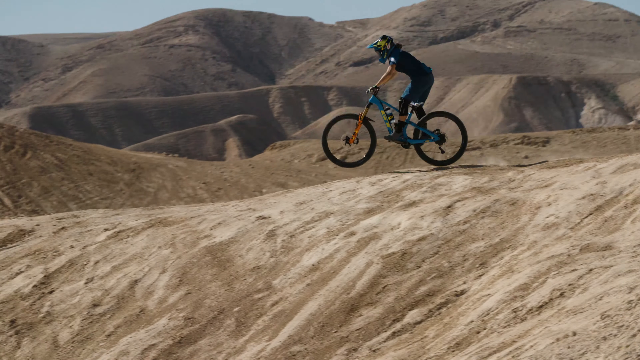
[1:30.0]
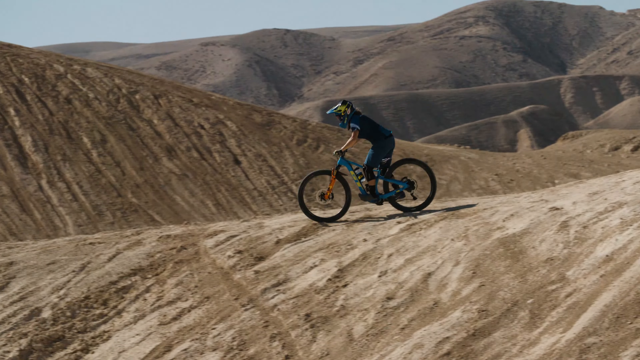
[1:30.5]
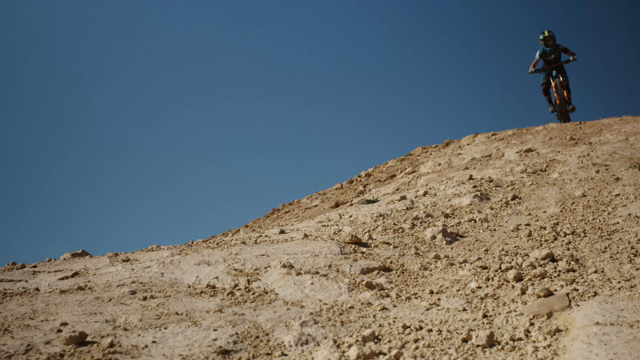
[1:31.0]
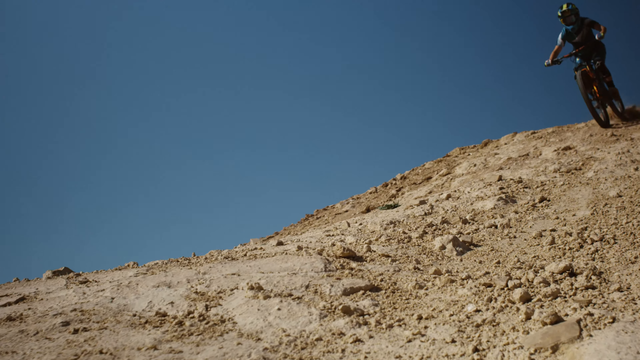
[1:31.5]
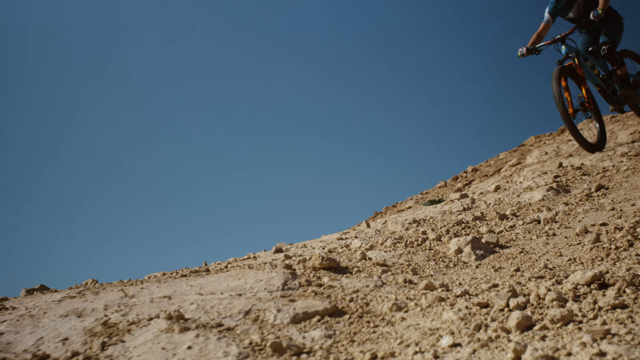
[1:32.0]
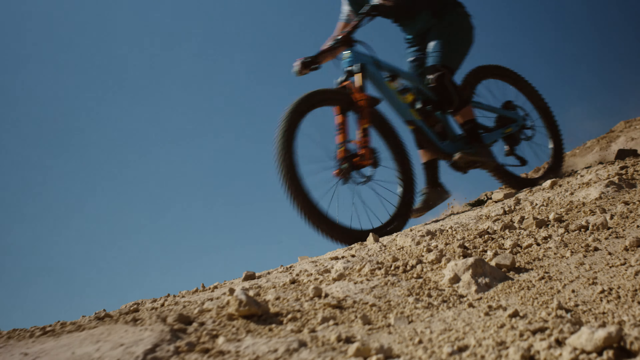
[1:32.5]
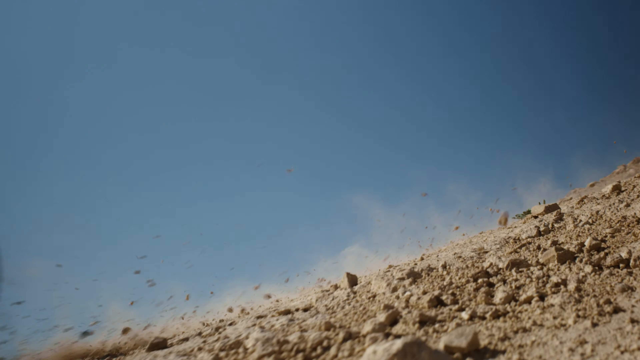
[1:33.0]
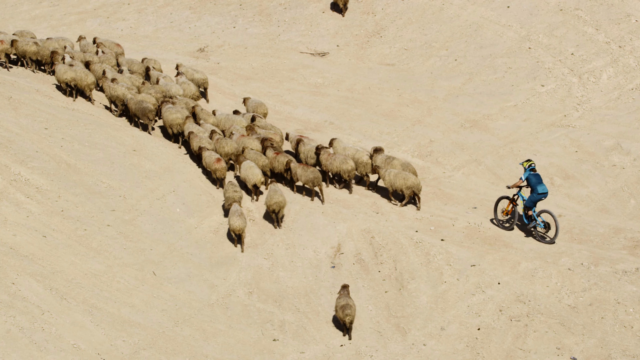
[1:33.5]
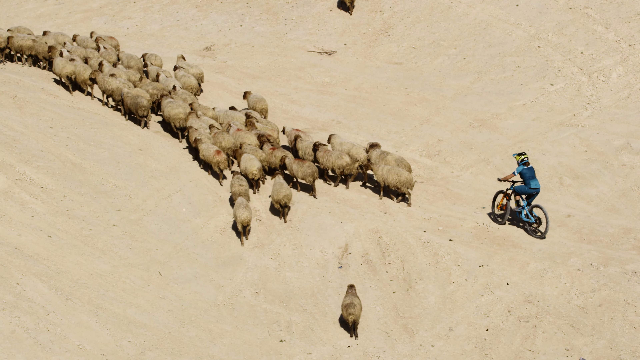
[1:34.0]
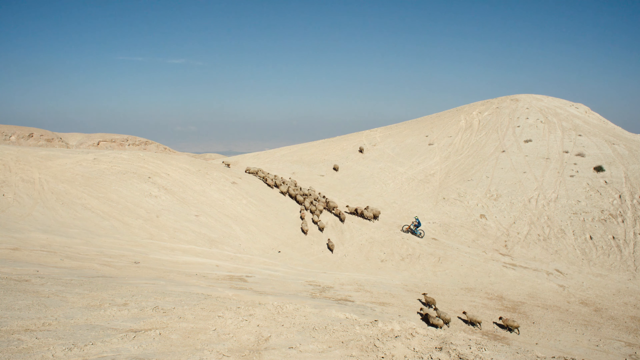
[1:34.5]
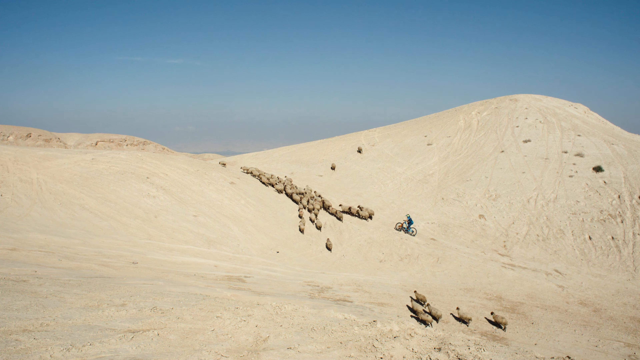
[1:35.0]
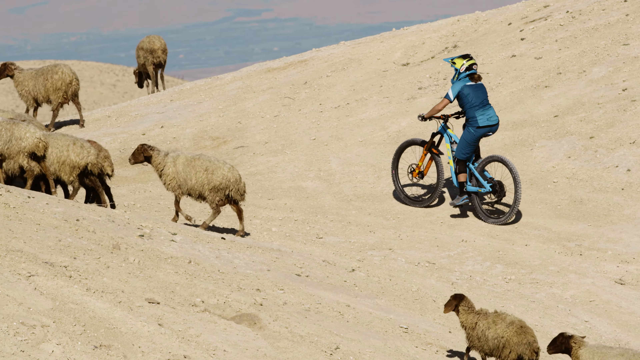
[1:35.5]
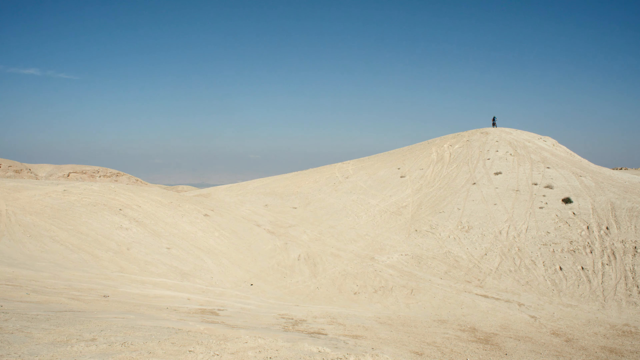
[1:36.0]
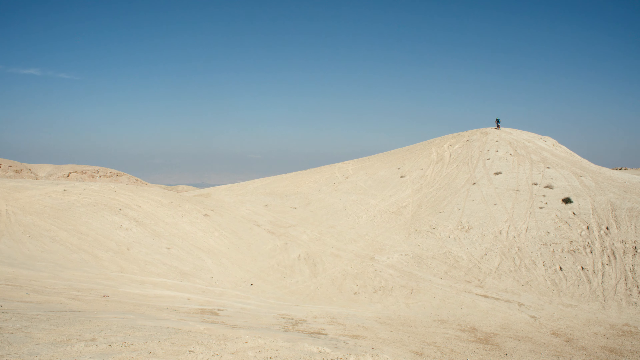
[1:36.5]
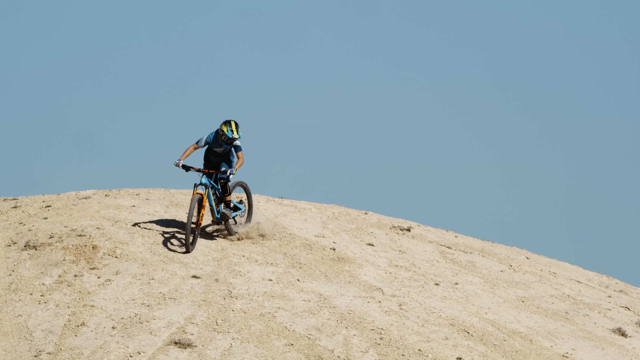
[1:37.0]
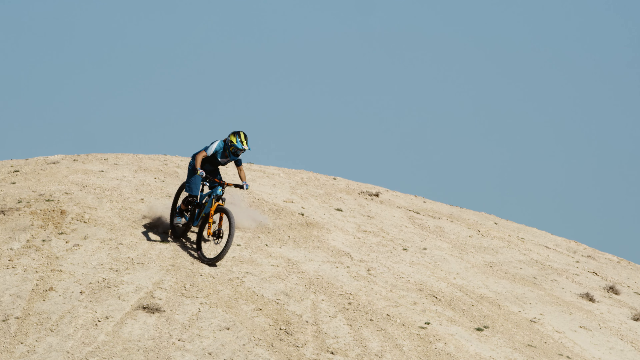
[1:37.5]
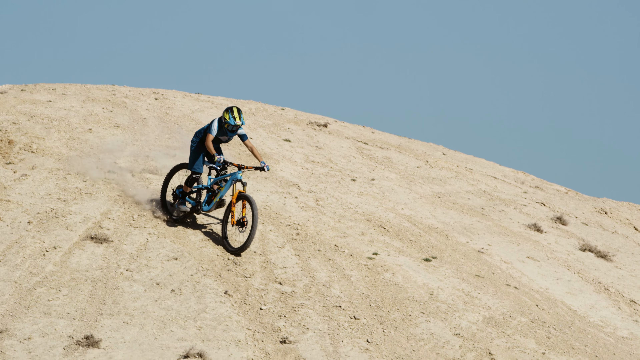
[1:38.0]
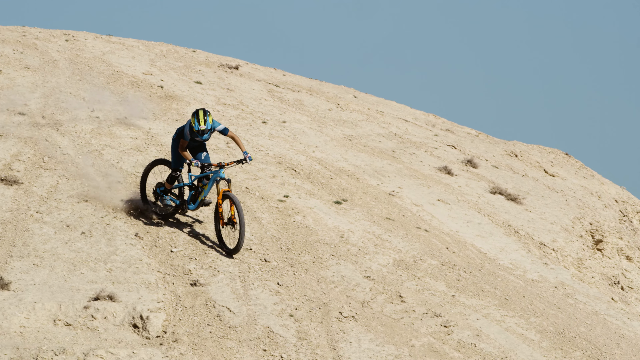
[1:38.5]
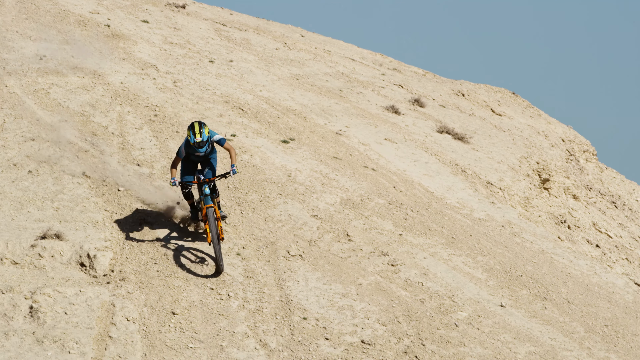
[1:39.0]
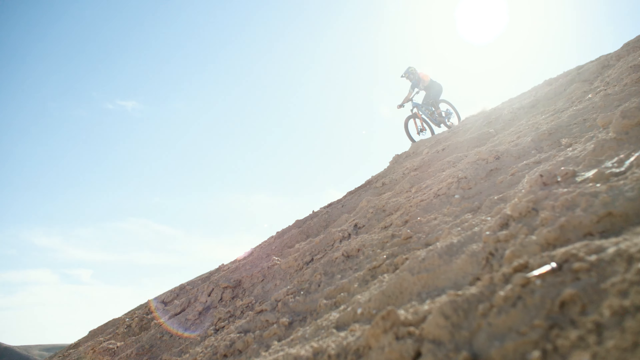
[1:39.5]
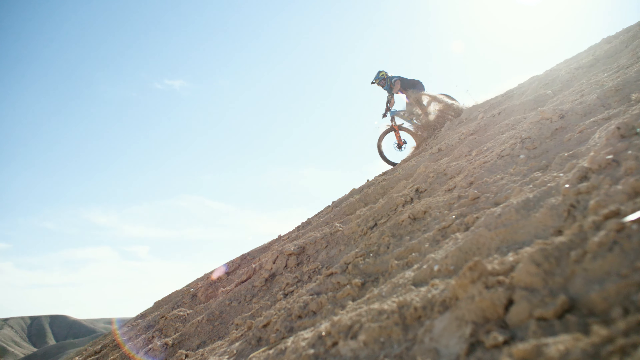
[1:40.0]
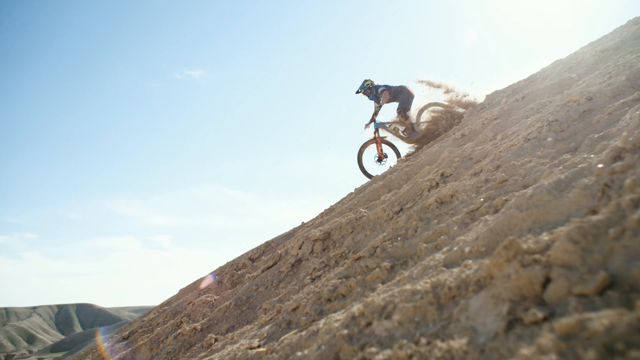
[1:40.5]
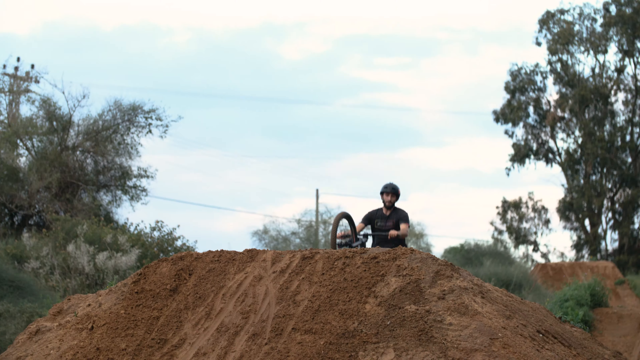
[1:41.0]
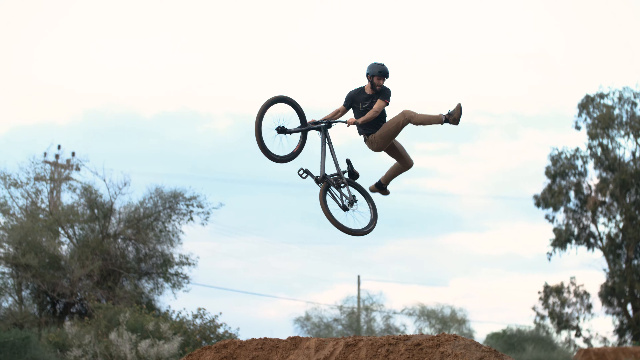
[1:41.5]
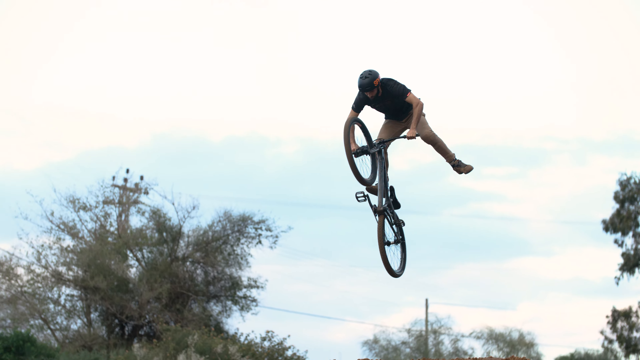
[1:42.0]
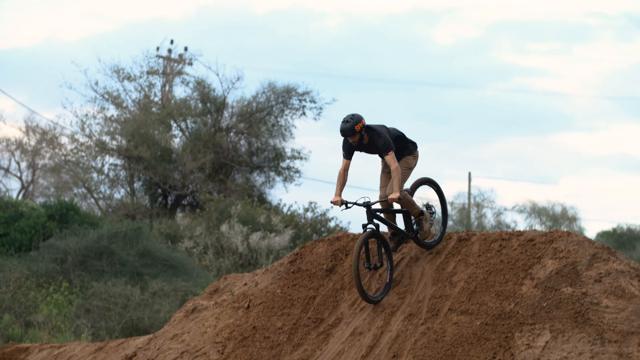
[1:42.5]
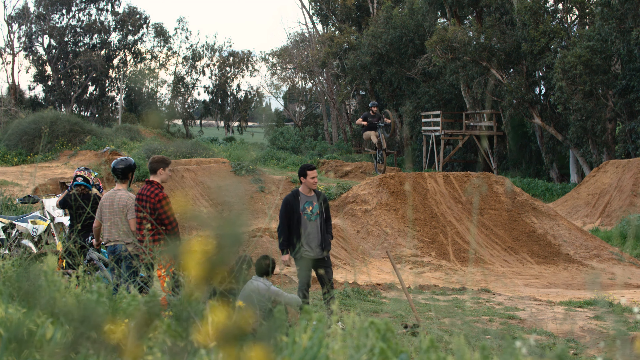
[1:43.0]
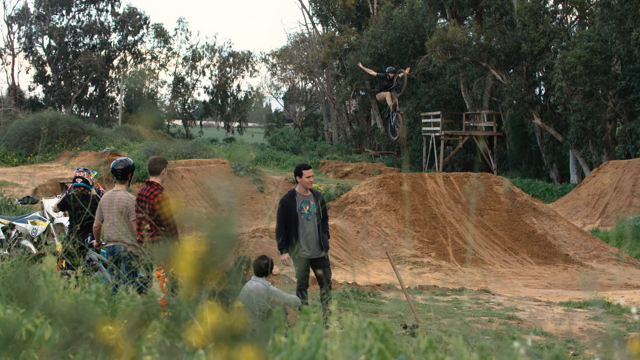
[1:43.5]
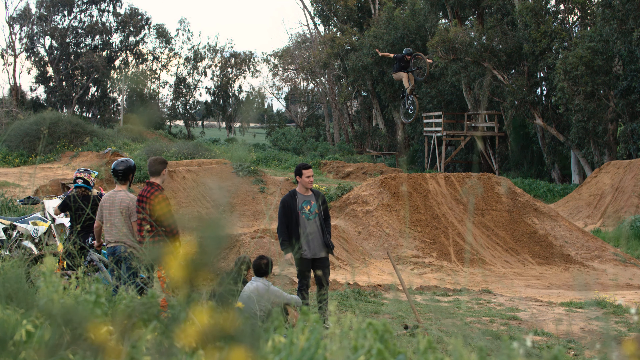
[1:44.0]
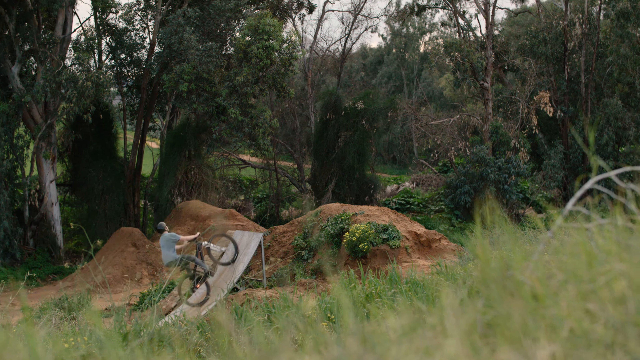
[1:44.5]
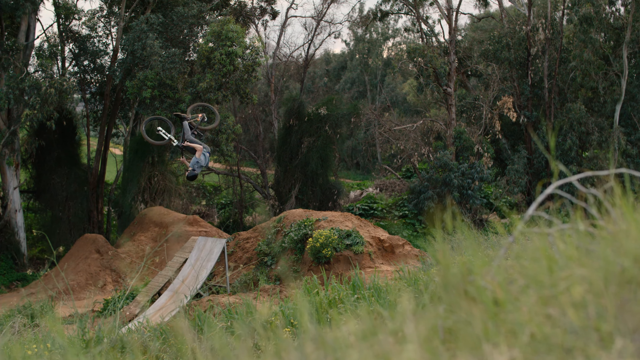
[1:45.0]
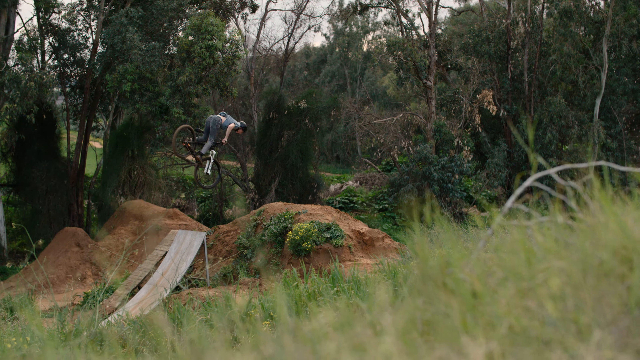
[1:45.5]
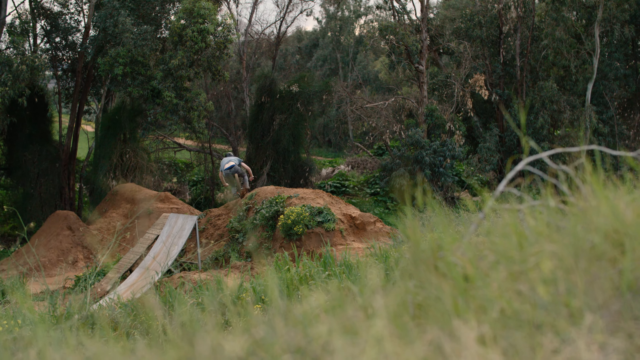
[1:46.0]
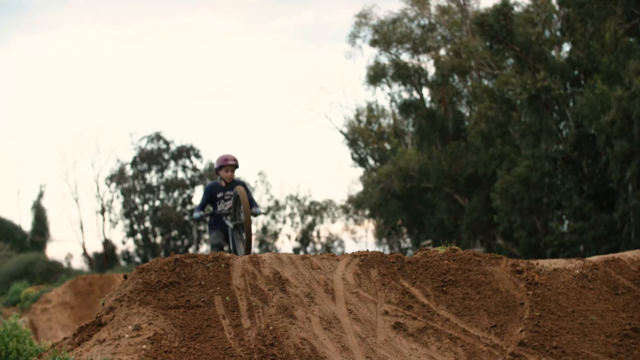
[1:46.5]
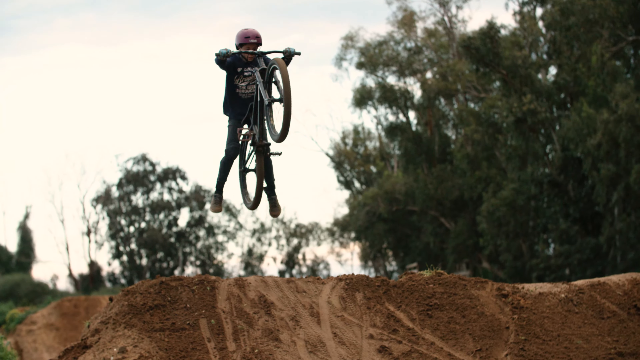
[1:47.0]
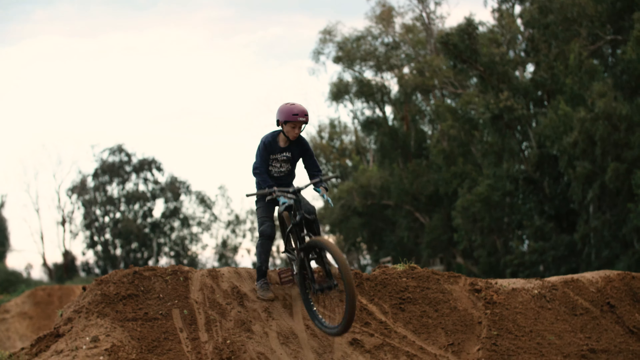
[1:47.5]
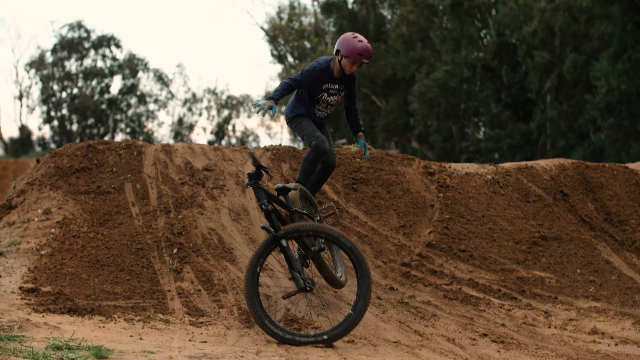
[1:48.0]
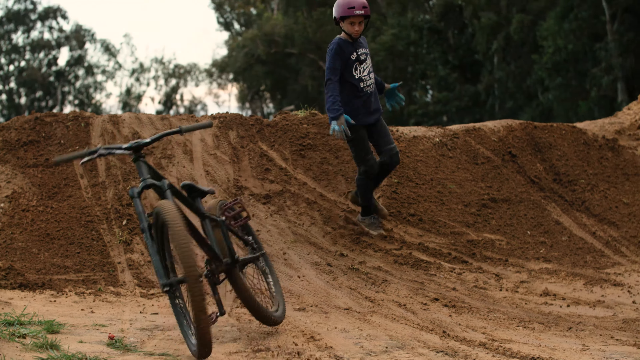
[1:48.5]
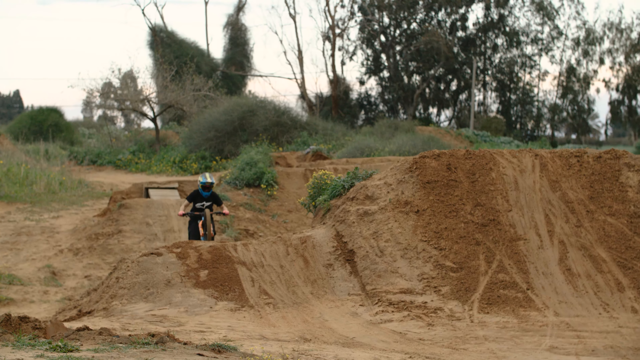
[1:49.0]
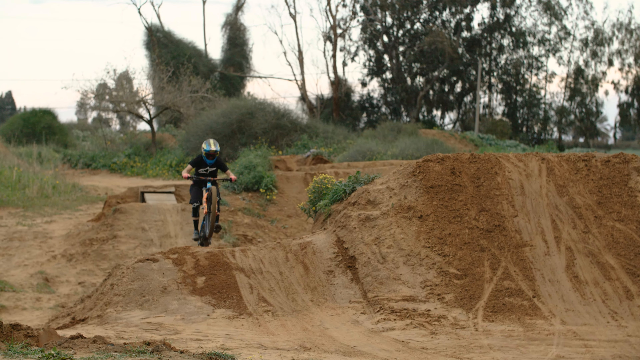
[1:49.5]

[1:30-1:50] A sideways view shows her riding right to left through a dusty, dirty, hilly area, with the camera following so she stays in the center. The video cuts to another such view. In one shot she rides very slowly behind a herd of what looks like sheep, or maybe goats, coming down a similar hill in the dusty, hilly area. Some shots are in slow motion. She leaps off mounds that serve as ramps and are evidently man-made, stretching her arms out in the air before landing. In one jump she spins upside down and does a 360; the rider is apparently her, though her face cannot be seen. A slow-motion version of this is also shown. She performs stunt tricks on this outdoor track of man-made mounds and ramps. In one shot she loses control of her bike; she lands on her feet but has to let the bike leave her hands, and it crashes to the ground.